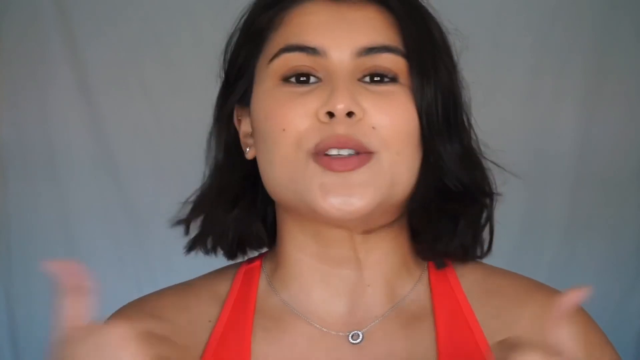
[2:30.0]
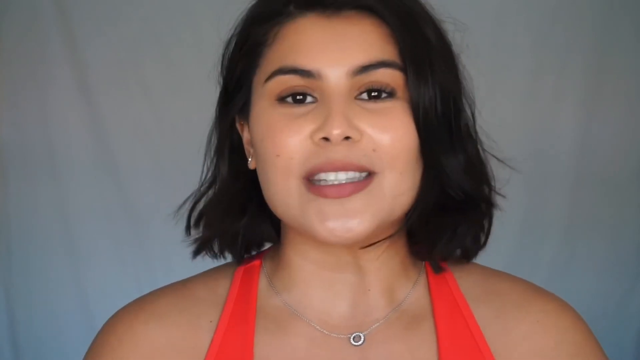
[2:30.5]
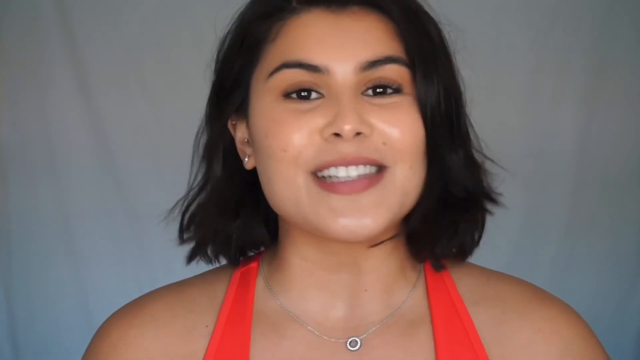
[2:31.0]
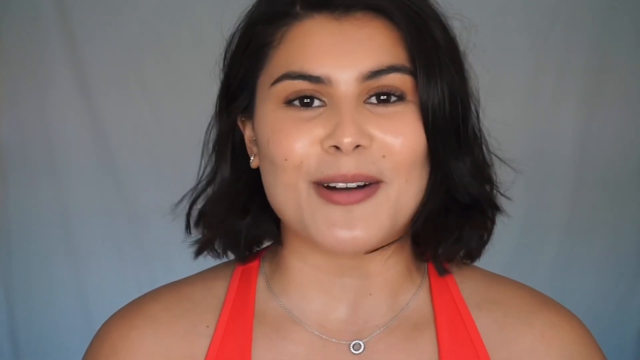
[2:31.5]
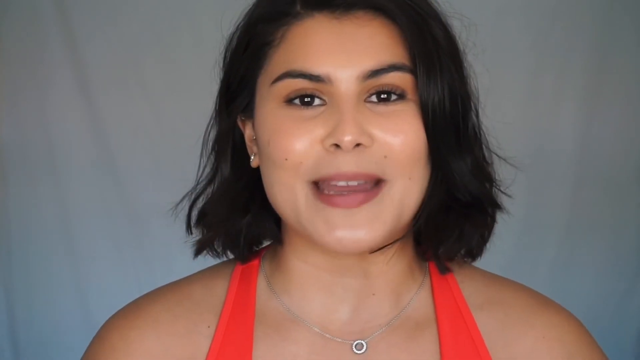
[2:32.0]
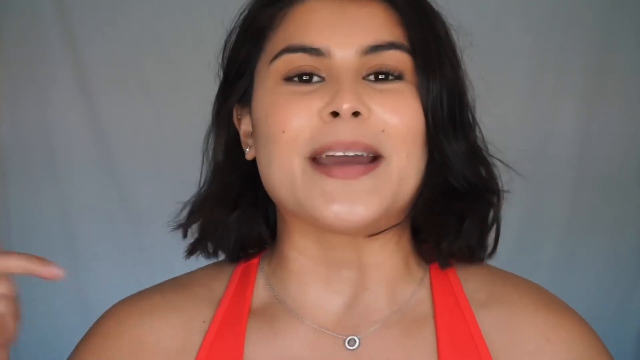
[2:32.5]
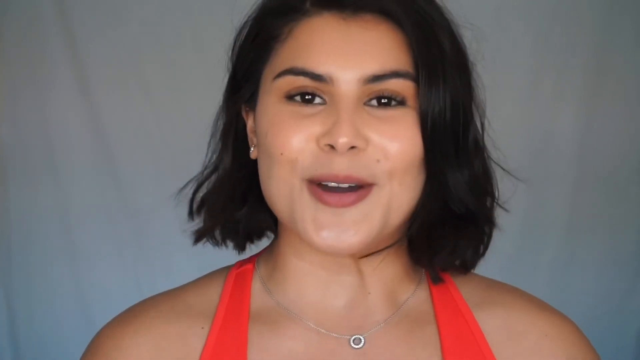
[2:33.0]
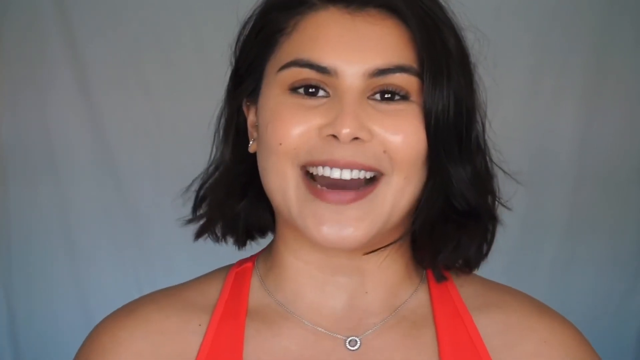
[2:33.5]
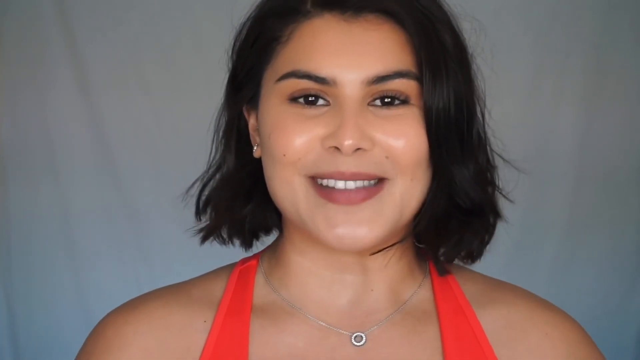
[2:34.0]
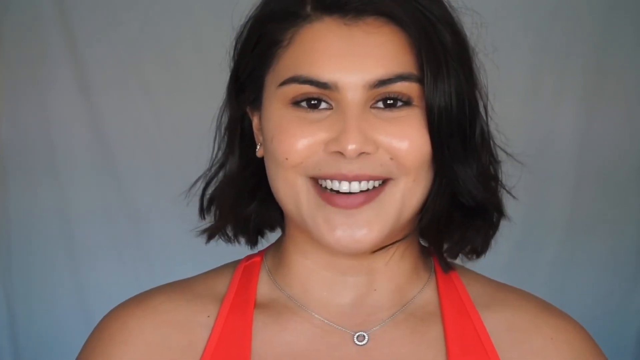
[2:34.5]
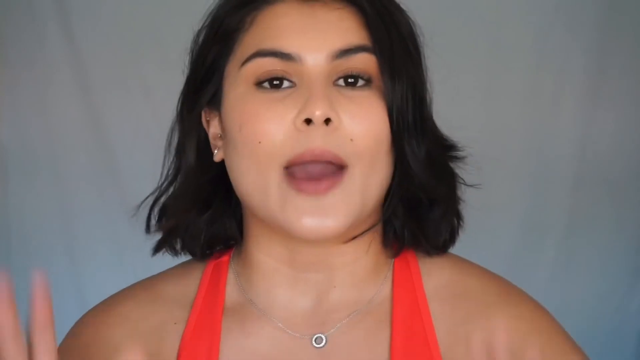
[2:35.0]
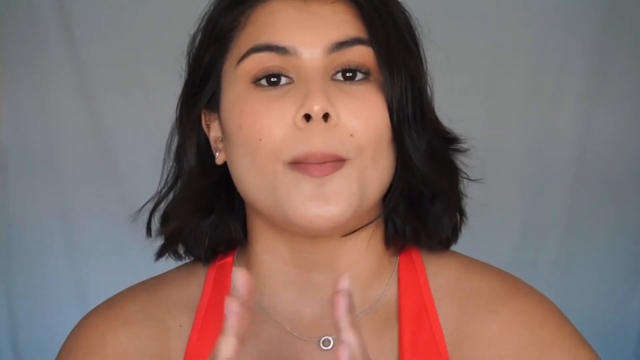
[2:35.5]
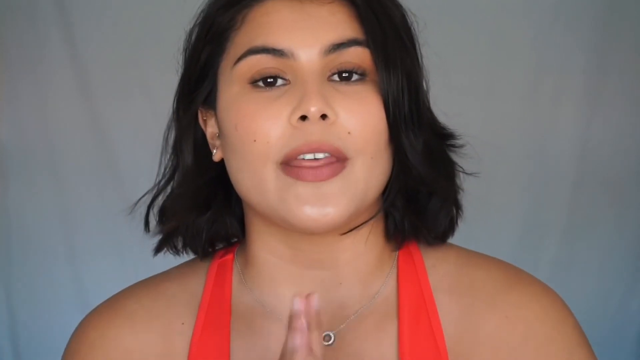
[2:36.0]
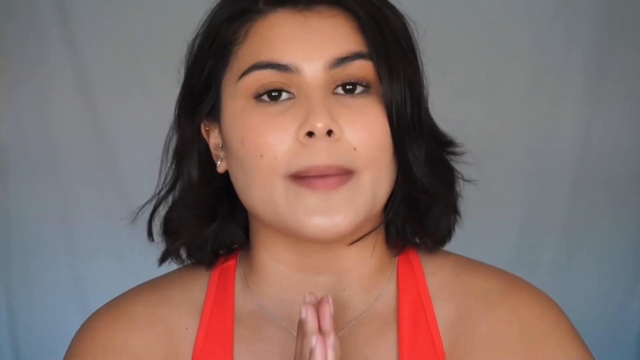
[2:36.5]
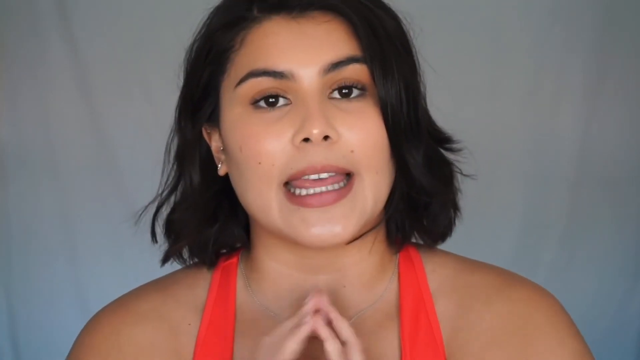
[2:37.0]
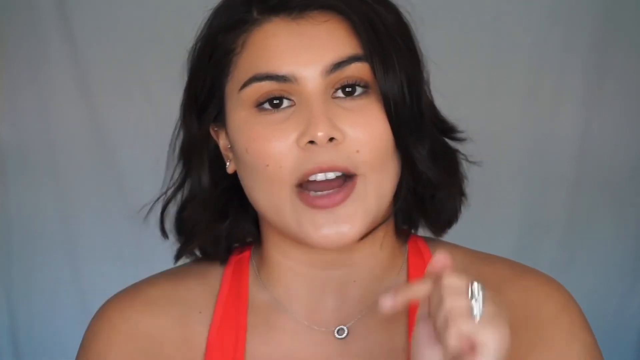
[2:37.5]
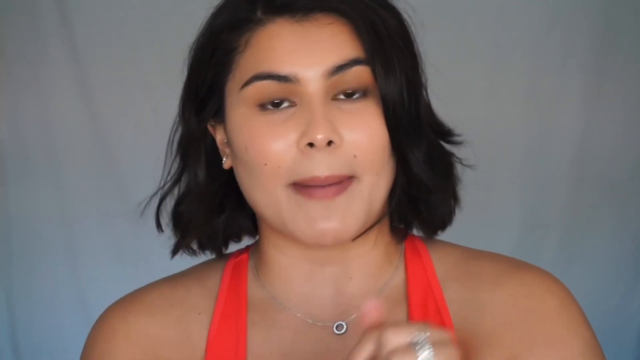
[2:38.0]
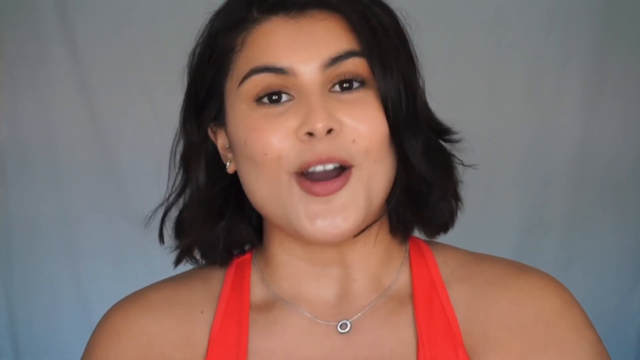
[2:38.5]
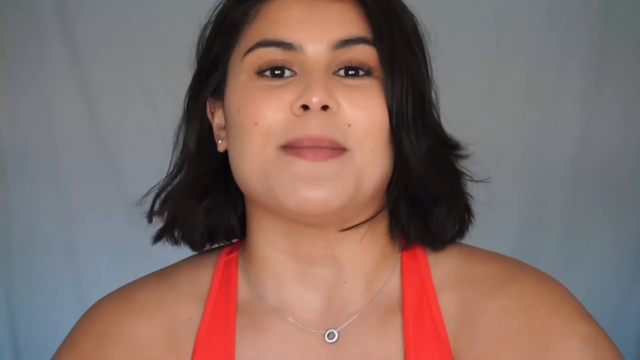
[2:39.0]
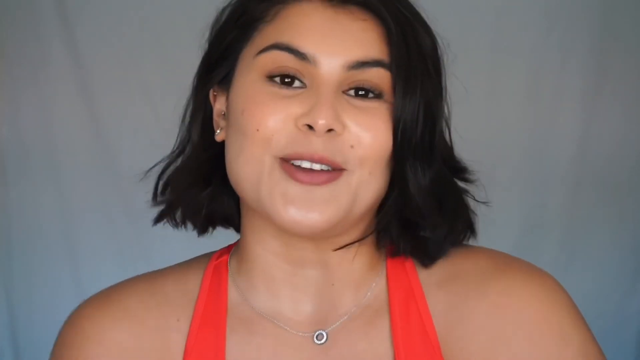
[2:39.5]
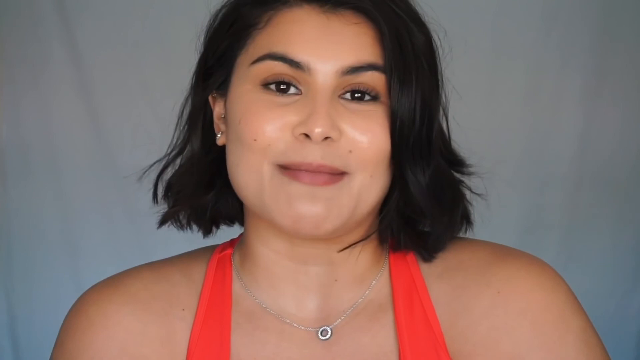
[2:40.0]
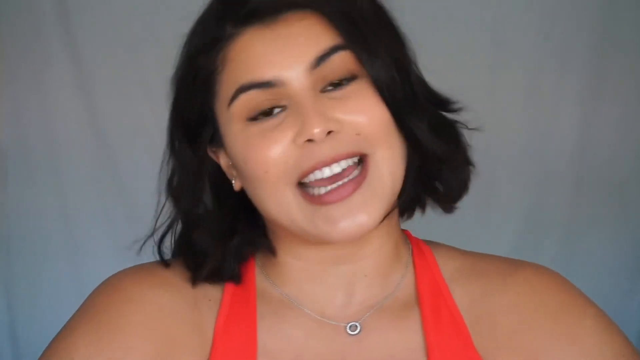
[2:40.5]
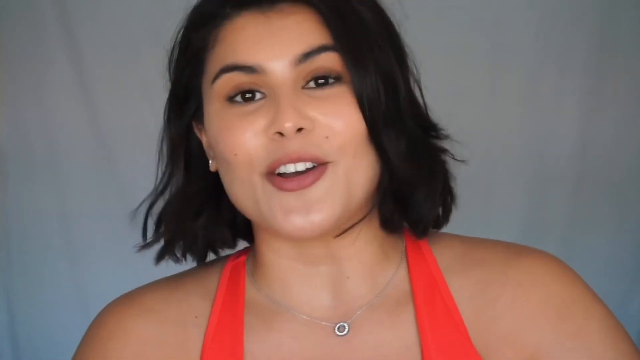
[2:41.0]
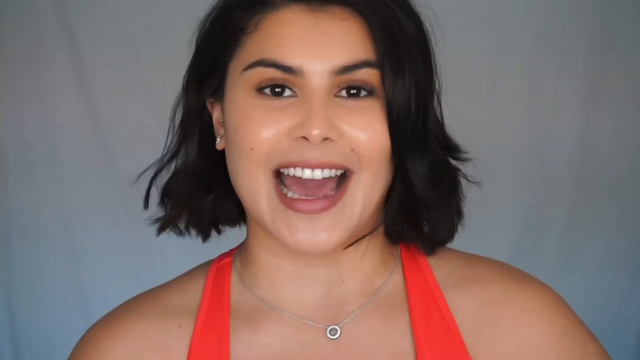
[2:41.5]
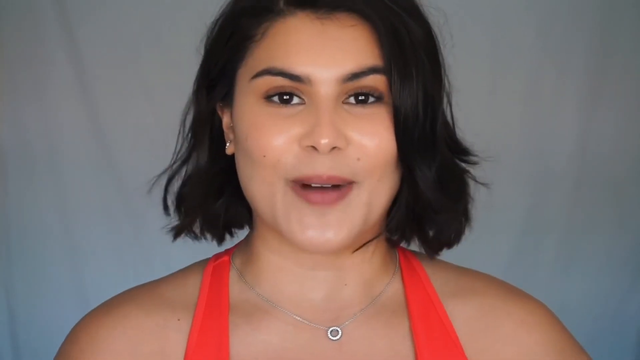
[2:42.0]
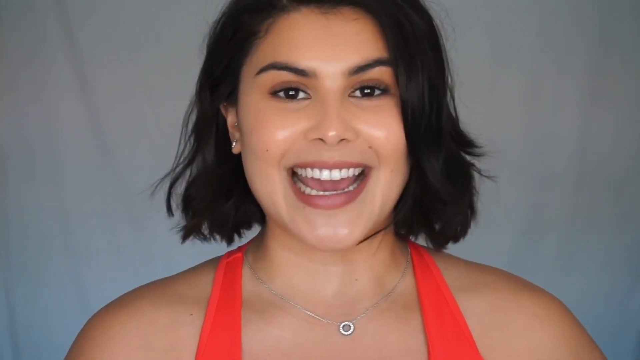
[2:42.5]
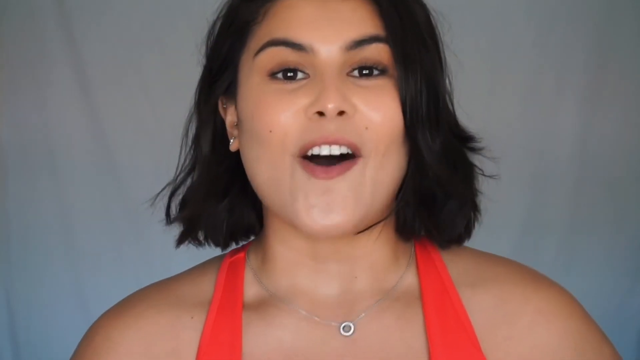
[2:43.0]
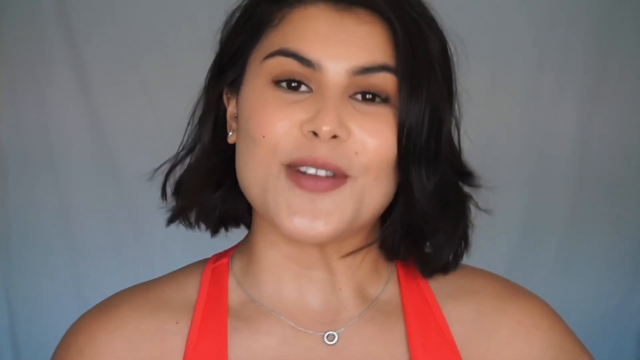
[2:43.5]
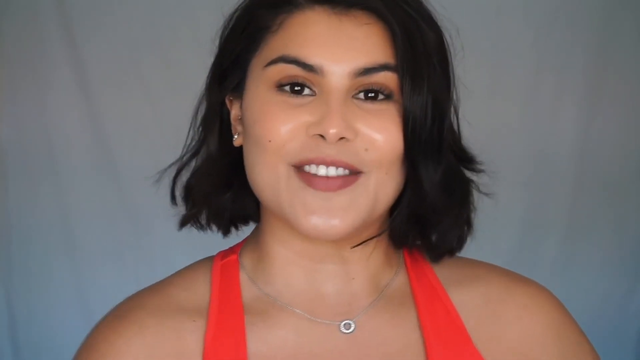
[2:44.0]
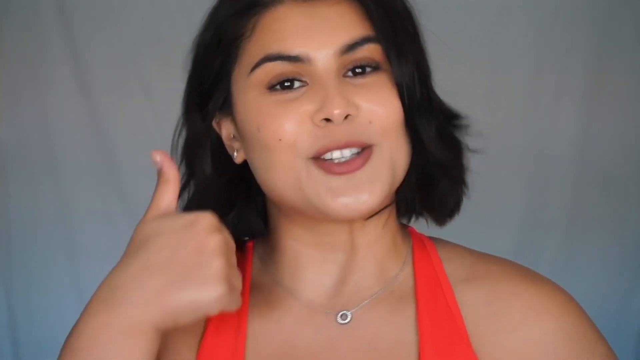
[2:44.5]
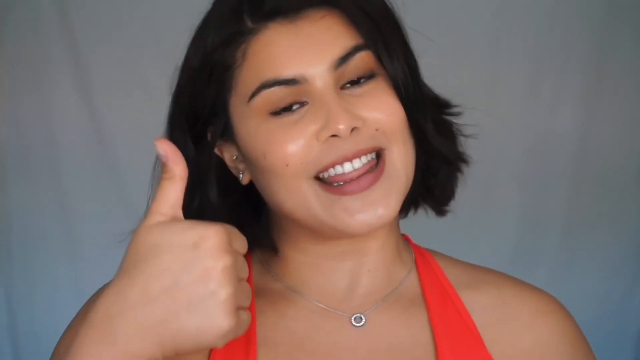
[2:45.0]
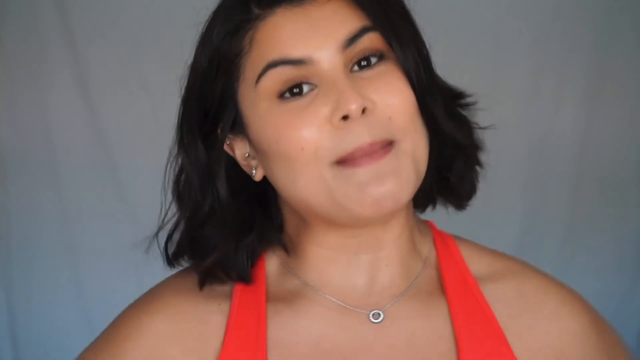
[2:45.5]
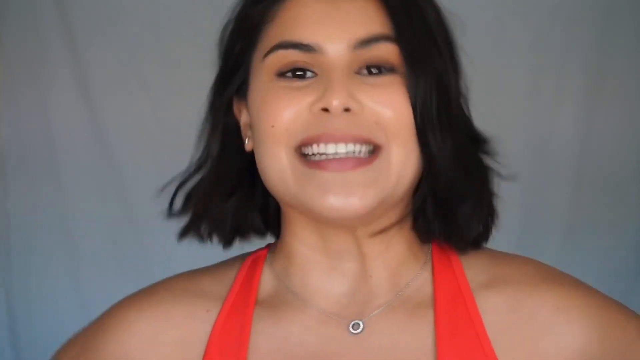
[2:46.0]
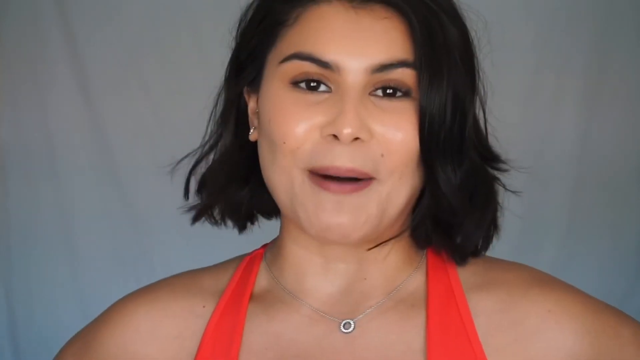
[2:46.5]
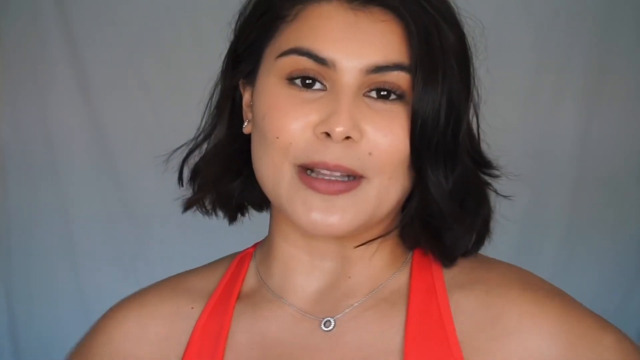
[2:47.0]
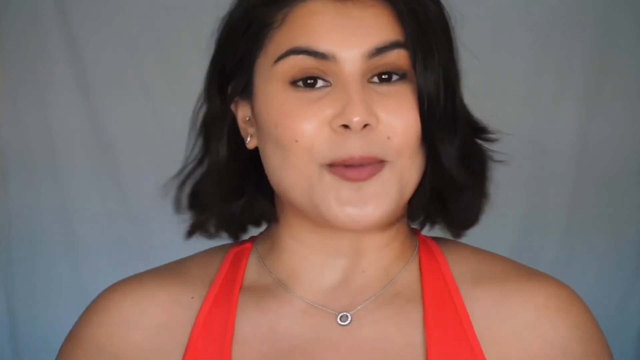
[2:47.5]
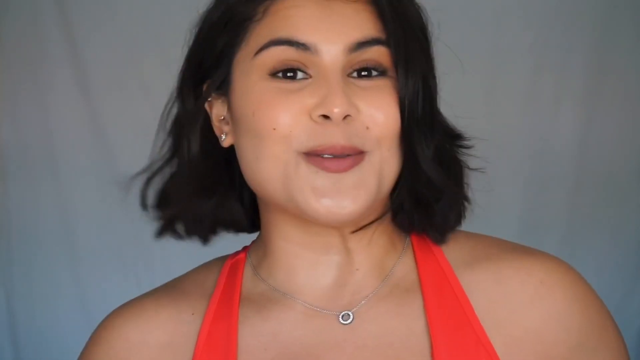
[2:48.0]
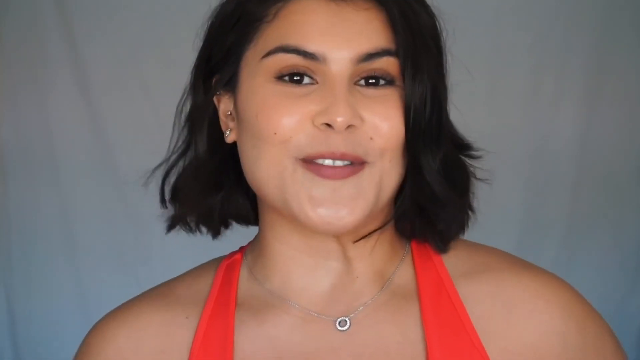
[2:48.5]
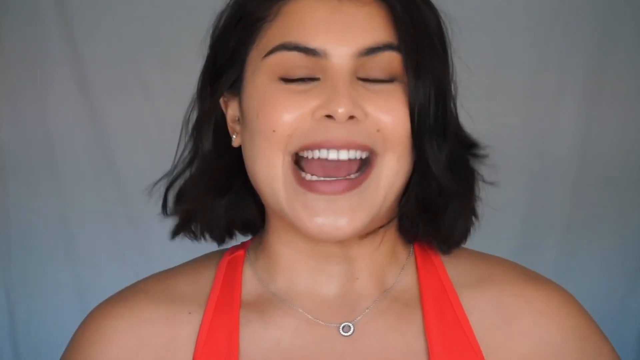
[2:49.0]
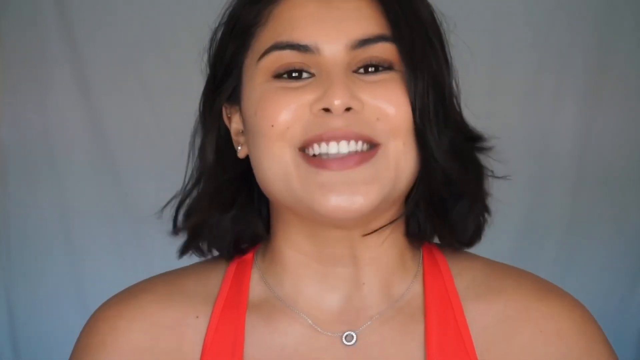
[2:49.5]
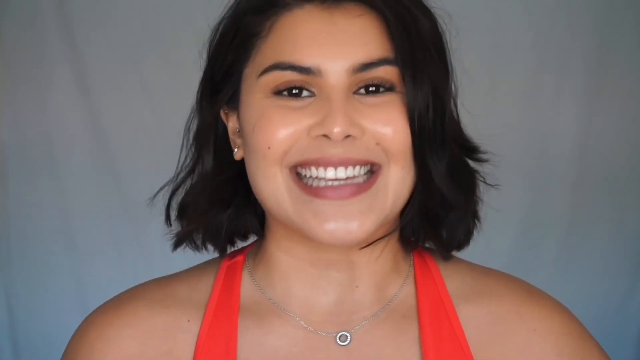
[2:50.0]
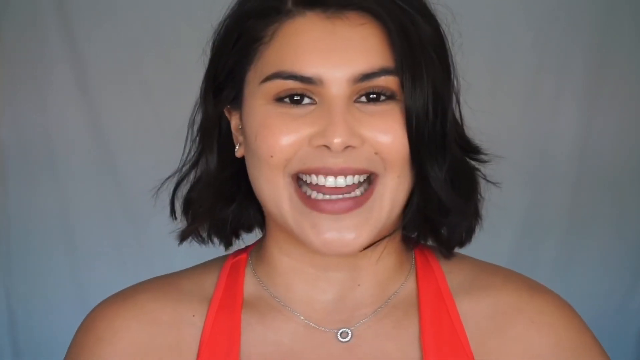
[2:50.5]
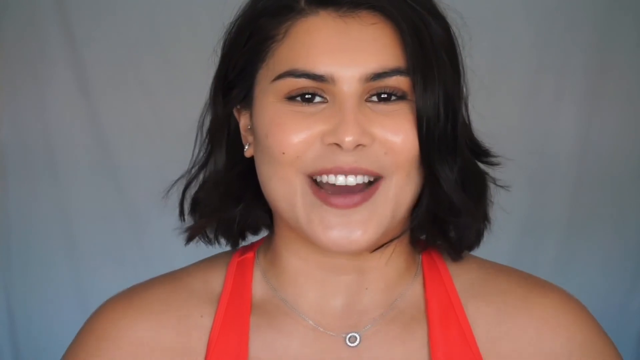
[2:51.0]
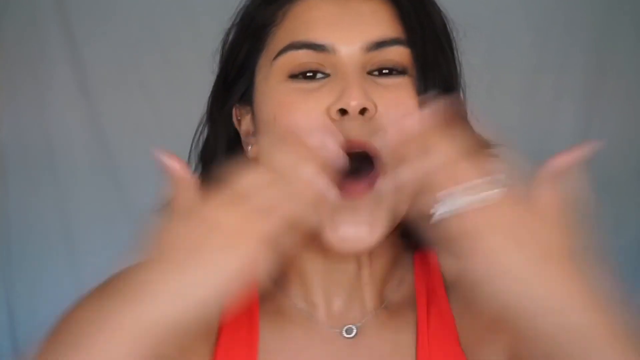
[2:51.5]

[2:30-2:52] In close-up, the woman continues speaking directly to the camera, her smile as warm and enthusiastic as ever; from the way her mouth moves, she seems to enunciate her words very clearly. She claps her hands together a few times, with only the tips of her fingers visible, clearly emphasising her point. She then leaves her hands in the prayer position briefly while she speaks, and then points downward with the four fingers of both hands, repeatedly raising and lowering them, possibly indicating something like a link below or the comments section. She shrugs slightly and bounces her shoulders around as she continues to speak with a very wide smile, then brings her right hand up into the frame in a thumbs up as she smiles and tilts her head to one side. She takes her hand out of frame and continues speaking for a while, and at the end brings both hands up to her mouth, blows the viewer a kiss, and spreads her hands out widely to the sides of the frame.